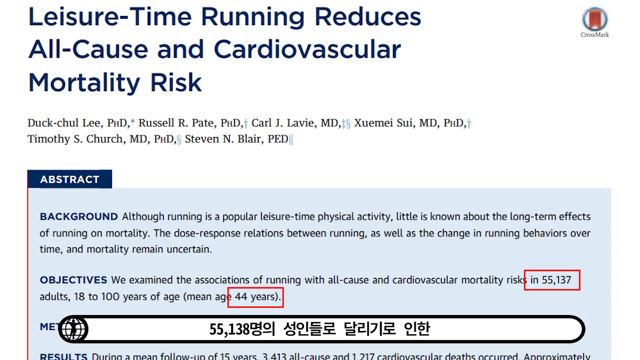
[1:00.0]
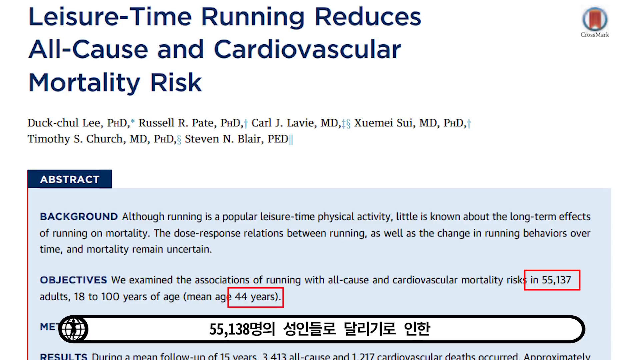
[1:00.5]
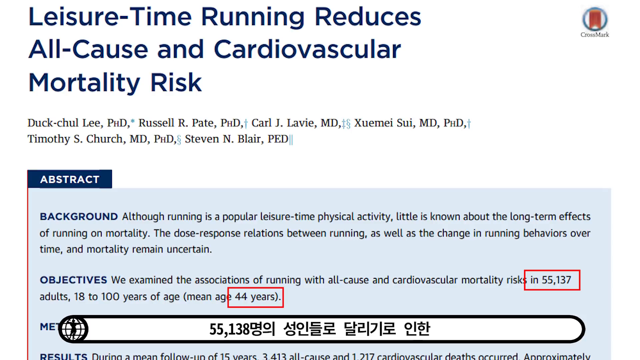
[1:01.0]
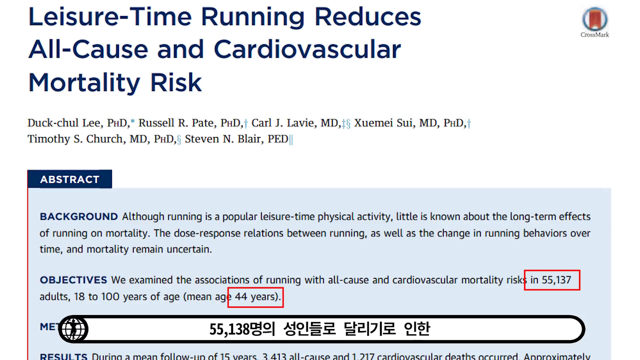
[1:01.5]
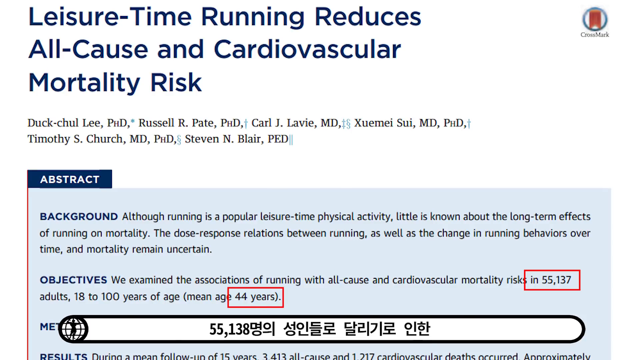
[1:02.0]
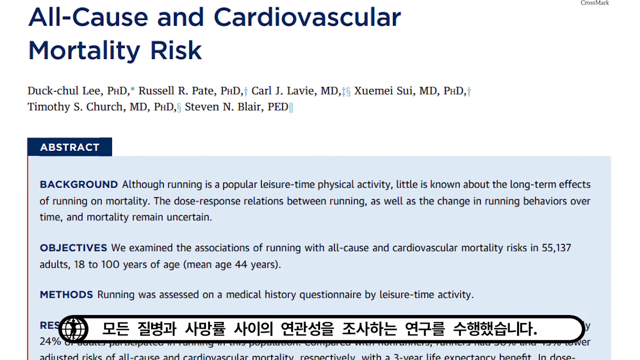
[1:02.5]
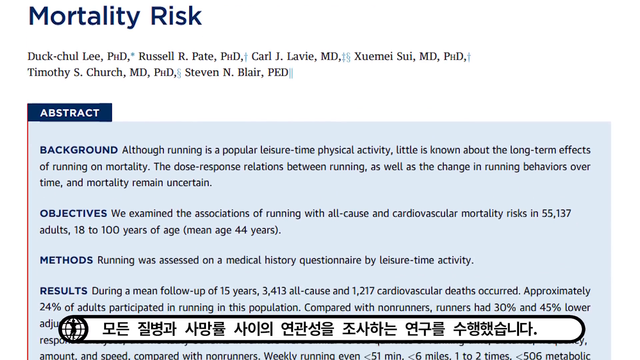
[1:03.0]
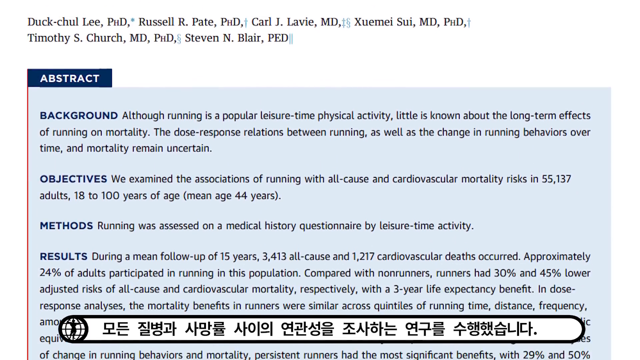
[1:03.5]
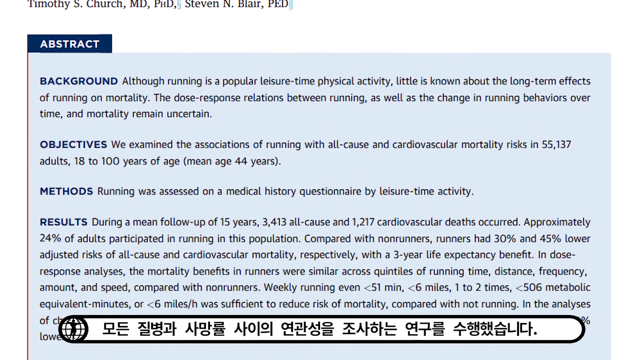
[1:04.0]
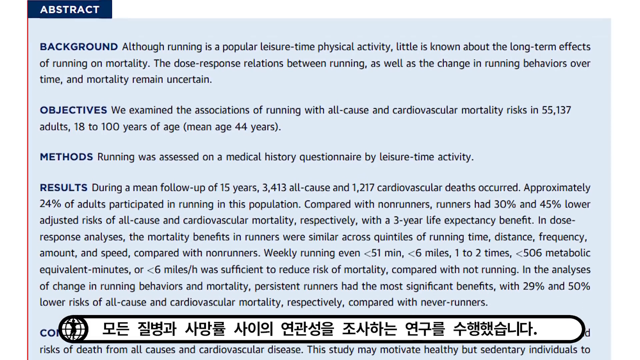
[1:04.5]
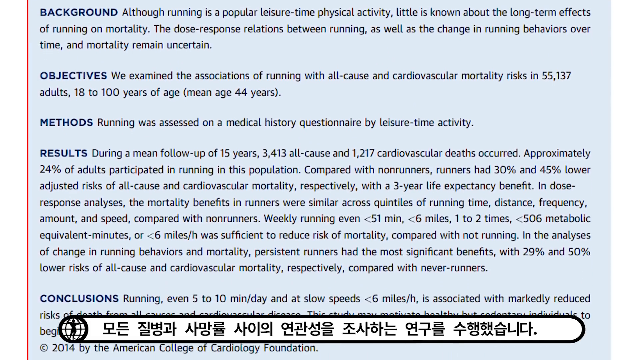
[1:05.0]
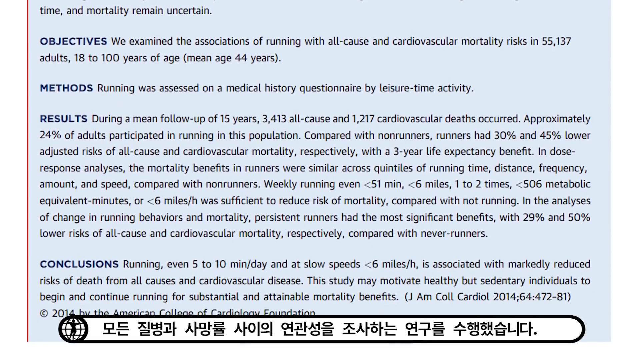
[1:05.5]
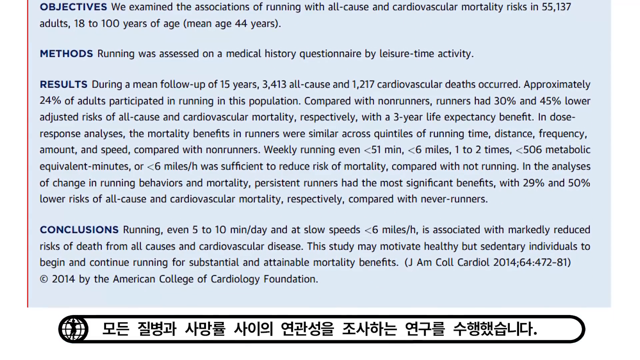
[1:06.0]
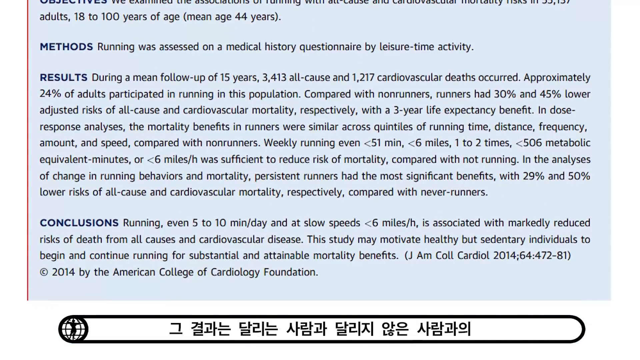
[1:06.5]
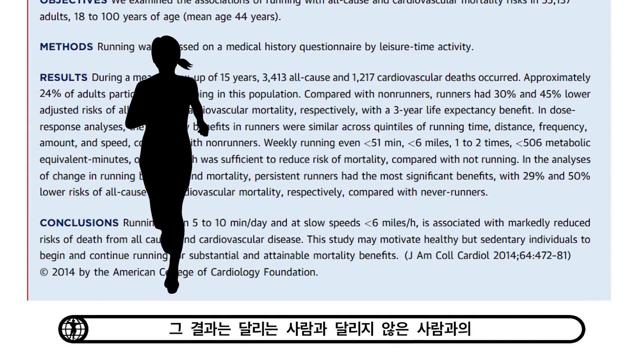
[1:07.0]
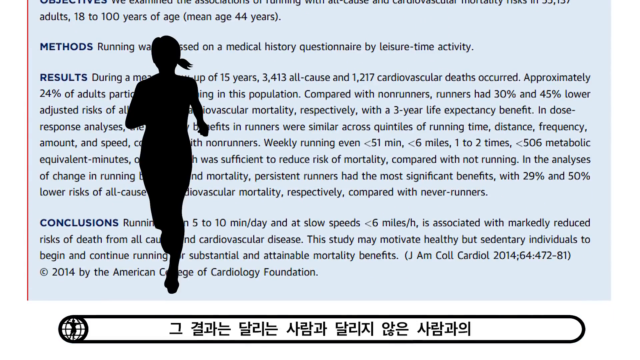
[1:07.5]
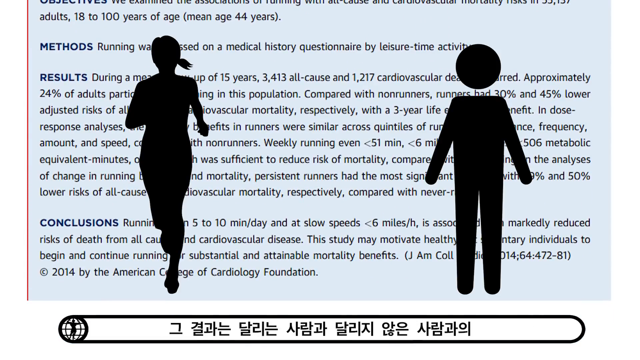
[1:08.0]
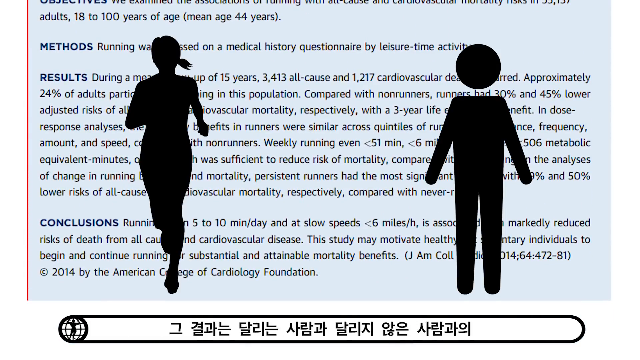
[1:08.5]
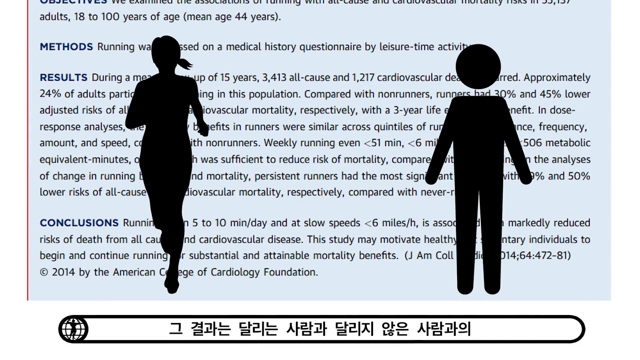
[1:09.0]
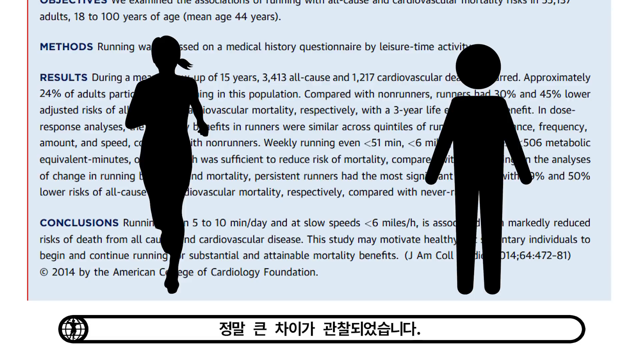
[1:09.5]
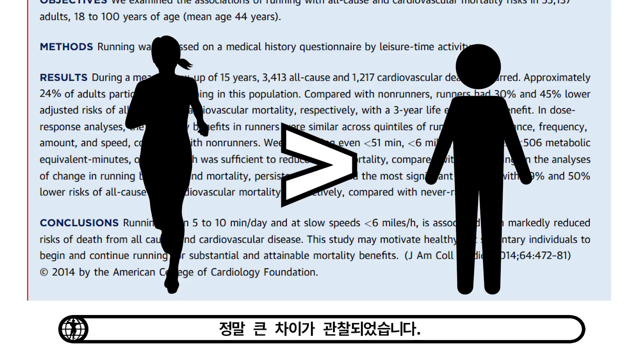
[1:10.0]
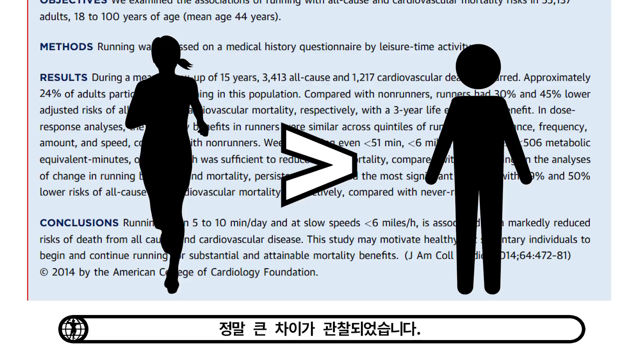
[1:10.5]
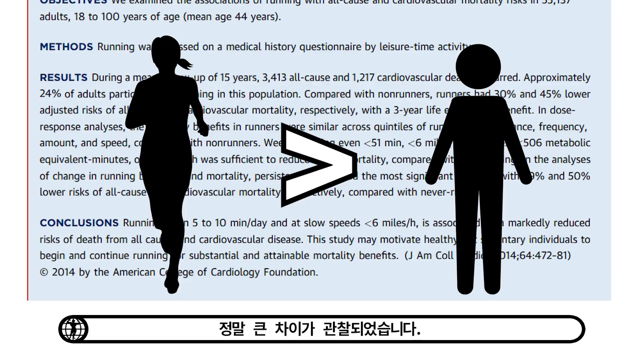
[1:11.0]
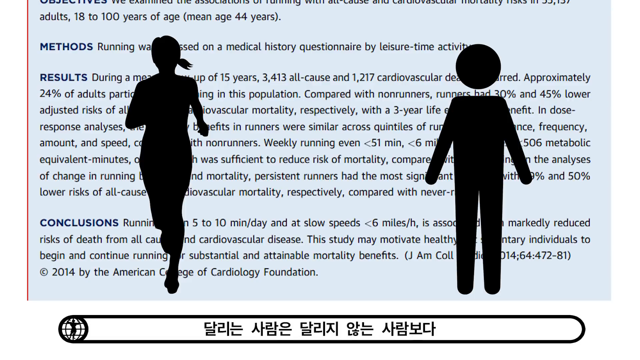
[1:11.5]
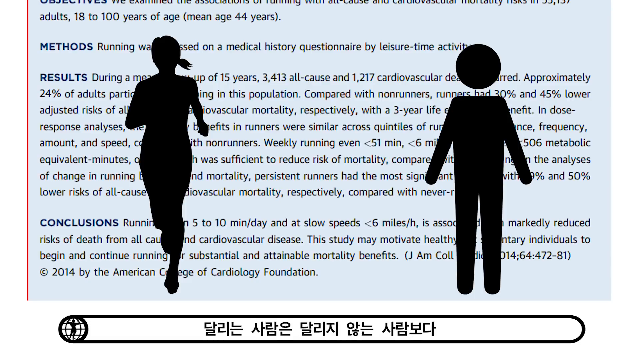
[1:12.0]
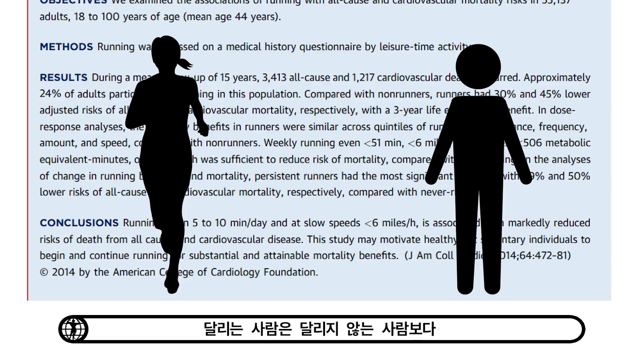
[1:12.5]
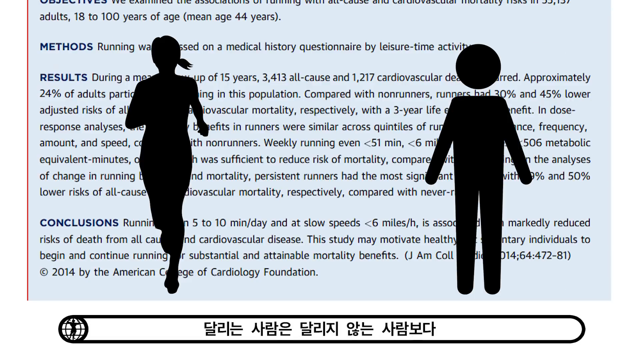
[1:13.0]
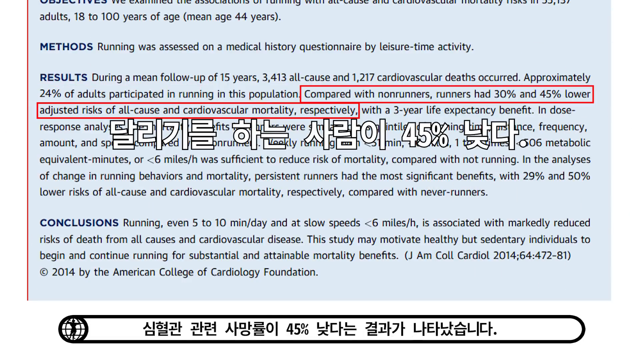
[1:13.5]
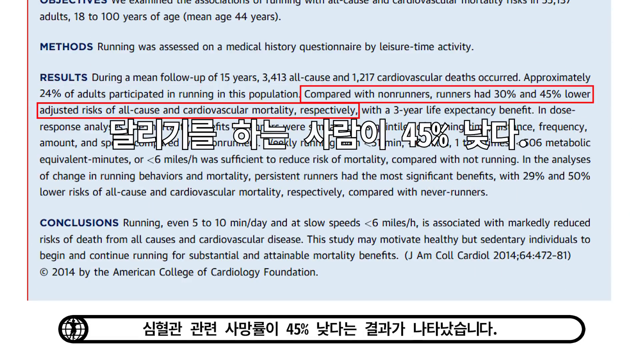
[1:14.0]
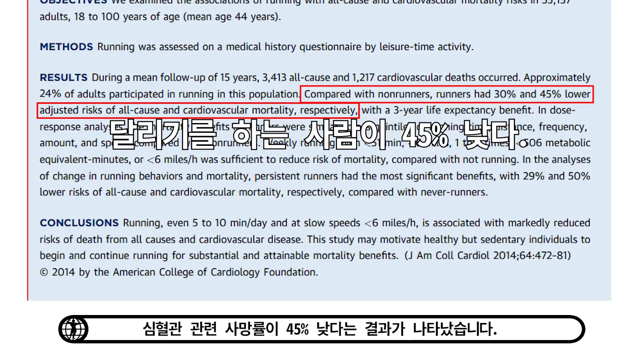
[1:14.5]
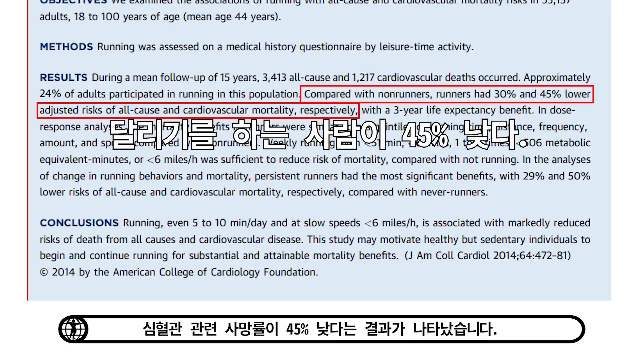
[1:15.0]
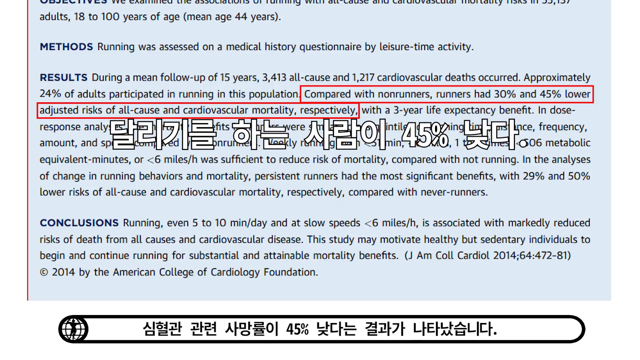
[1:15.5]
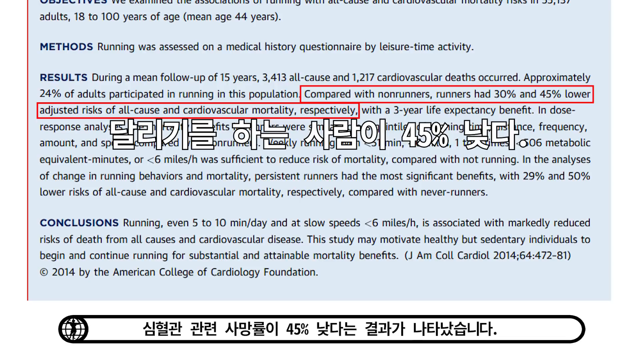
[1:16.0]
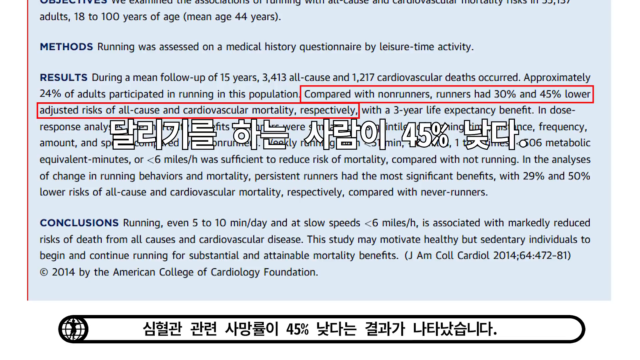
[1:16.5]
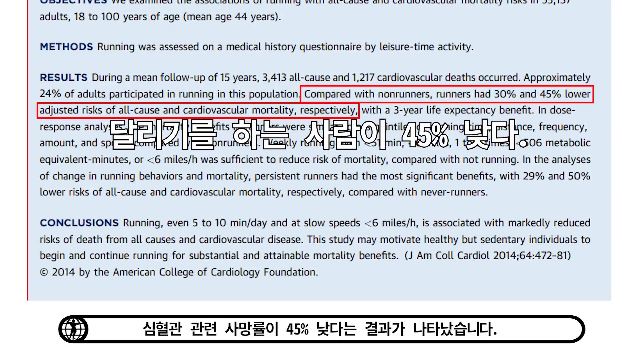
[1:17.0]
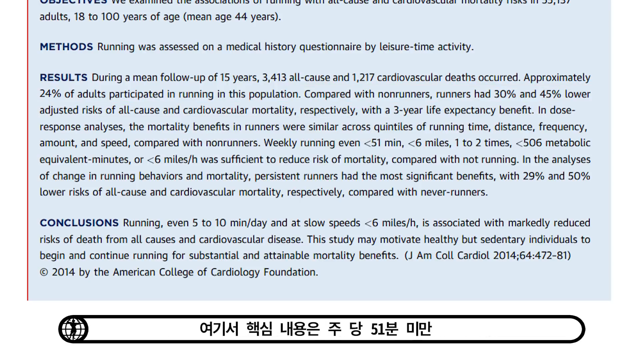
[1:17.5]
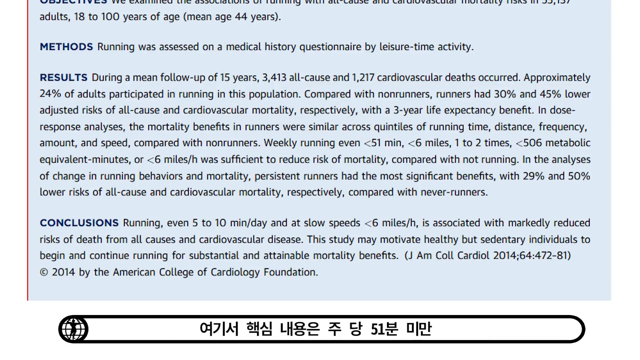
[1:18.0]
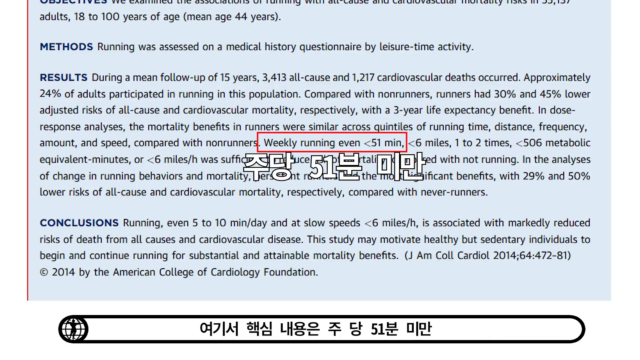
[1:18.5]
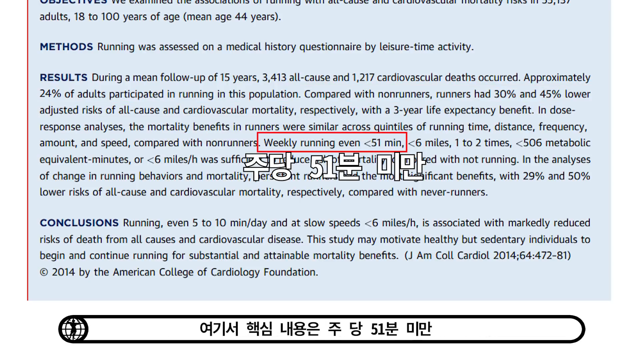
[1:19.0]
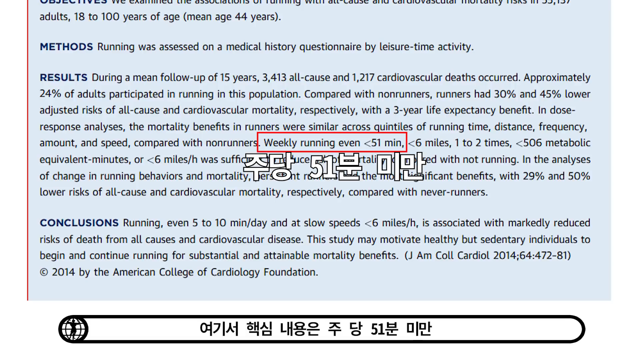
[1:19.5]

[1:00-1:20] The video shows written information, apparently about health benefits of exercise. It covers the background of running and its benefits, with a list of strengths, objectives, methods and results. The results compare runners versus non-runners, and paragraphs of text describe the benefits of running and cardiovascular results.